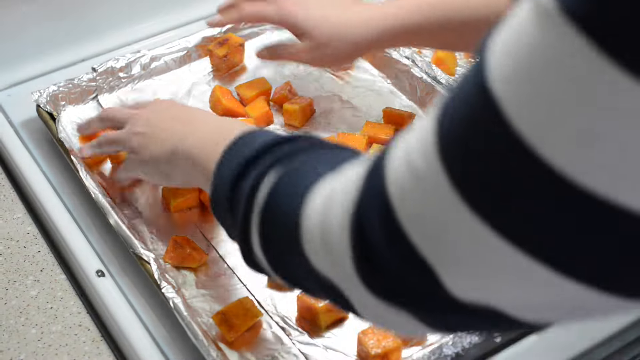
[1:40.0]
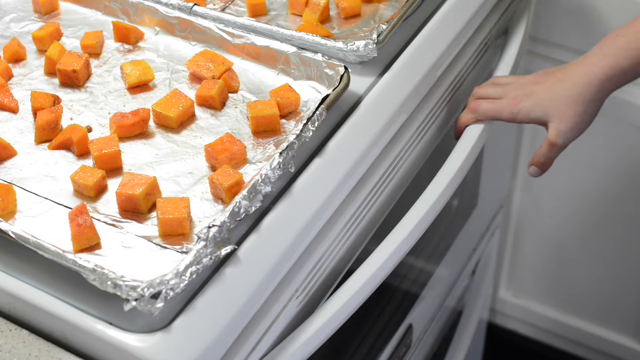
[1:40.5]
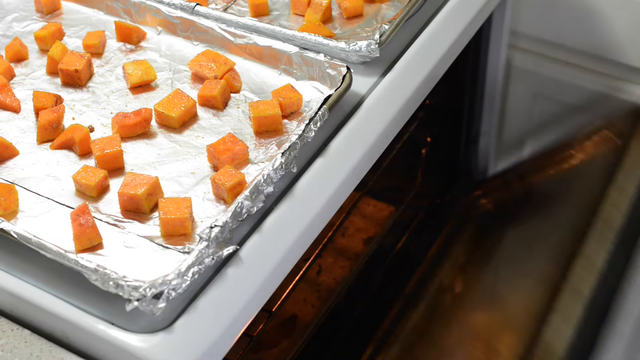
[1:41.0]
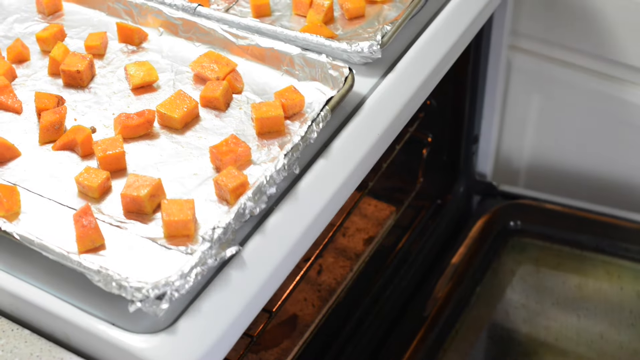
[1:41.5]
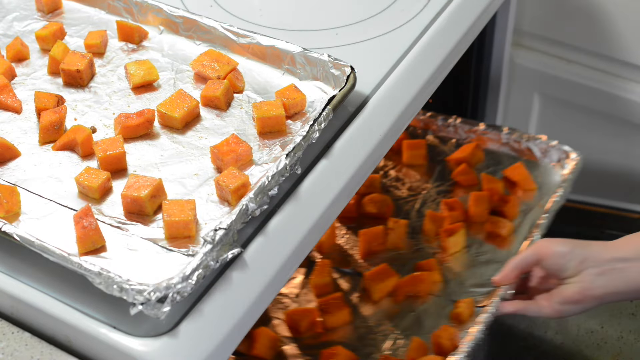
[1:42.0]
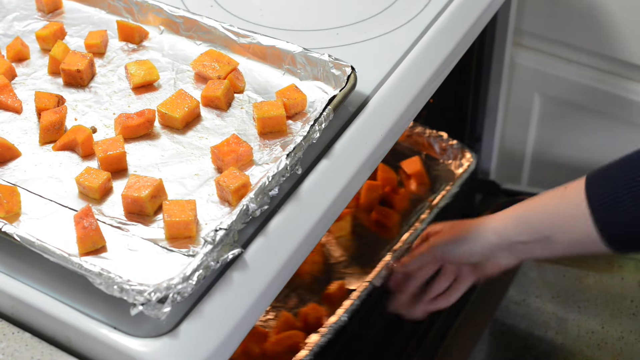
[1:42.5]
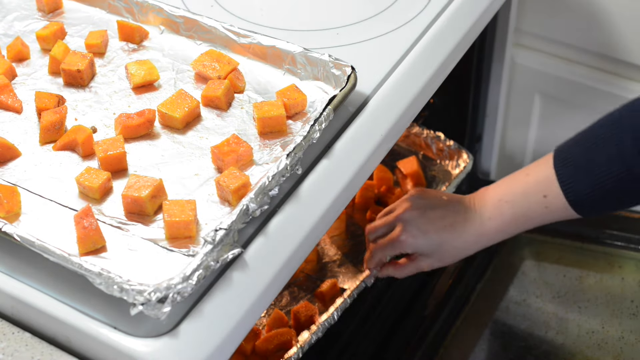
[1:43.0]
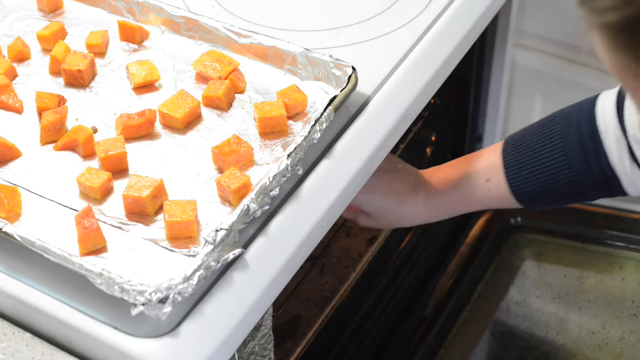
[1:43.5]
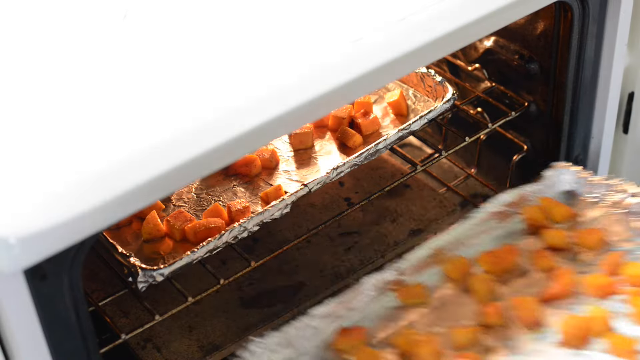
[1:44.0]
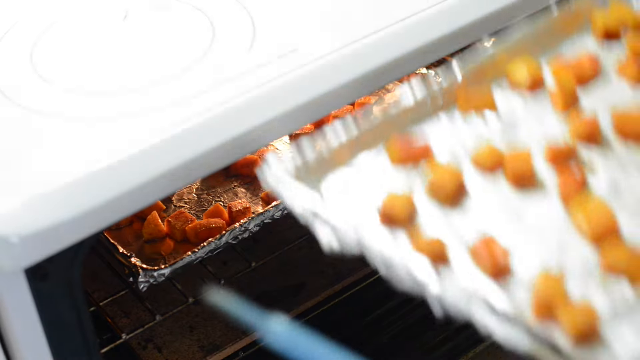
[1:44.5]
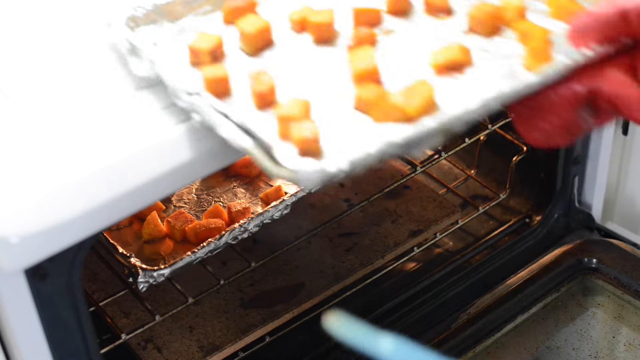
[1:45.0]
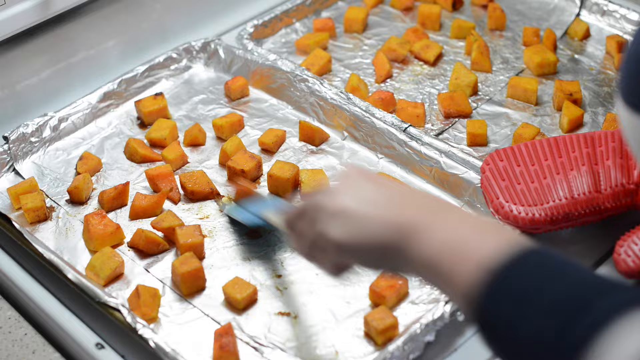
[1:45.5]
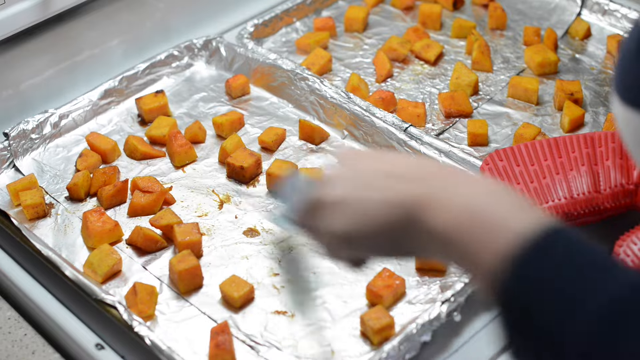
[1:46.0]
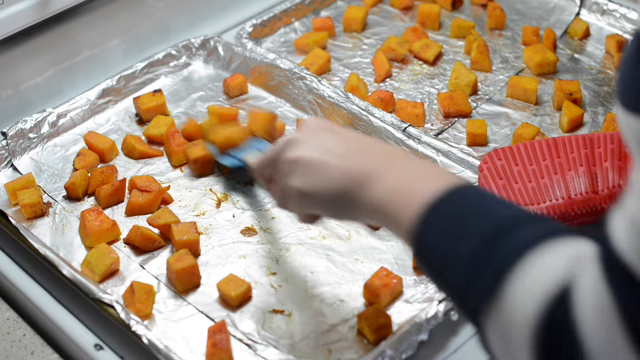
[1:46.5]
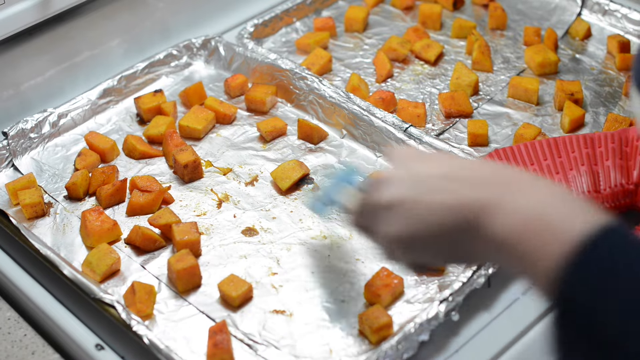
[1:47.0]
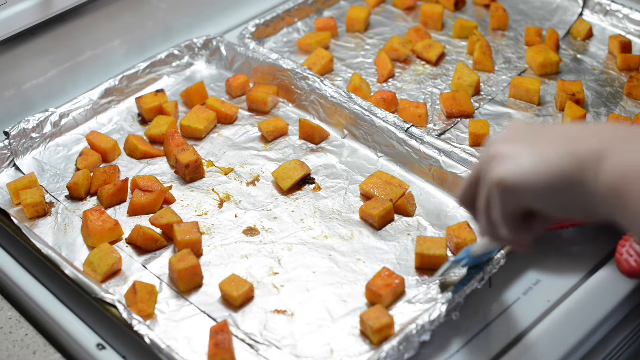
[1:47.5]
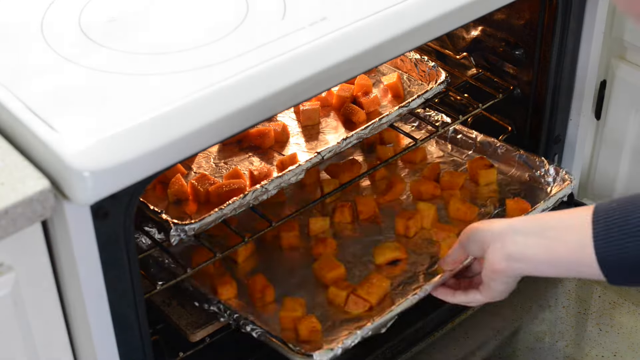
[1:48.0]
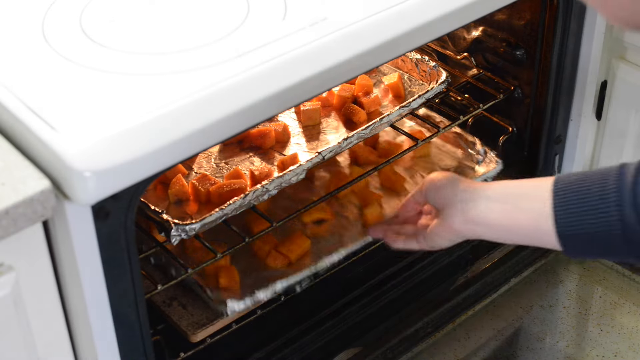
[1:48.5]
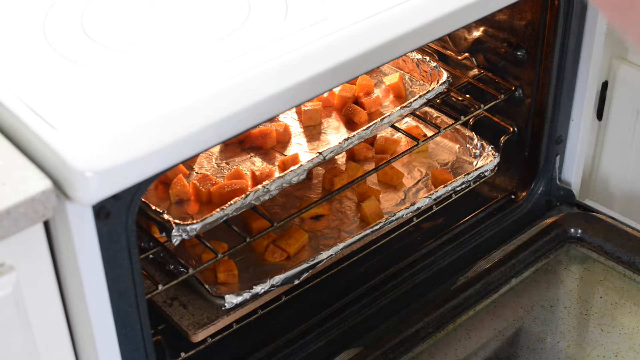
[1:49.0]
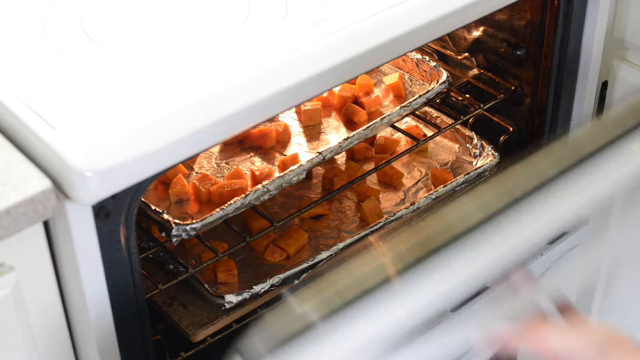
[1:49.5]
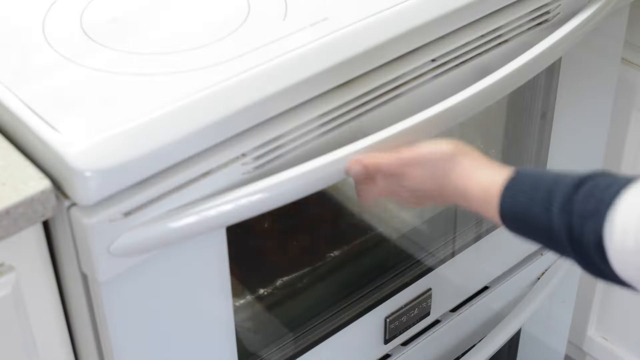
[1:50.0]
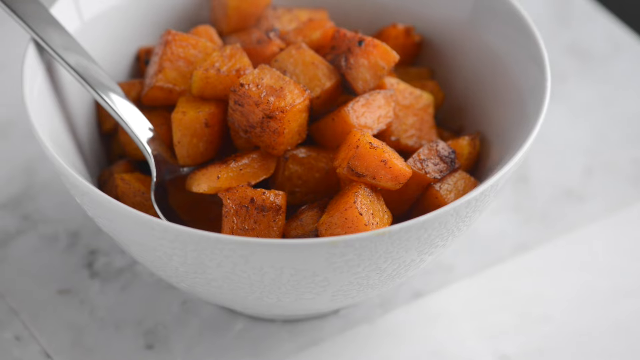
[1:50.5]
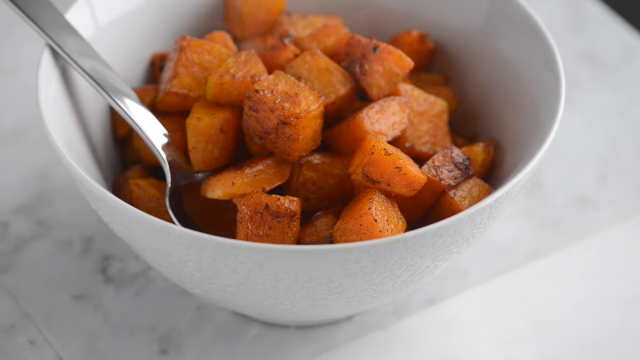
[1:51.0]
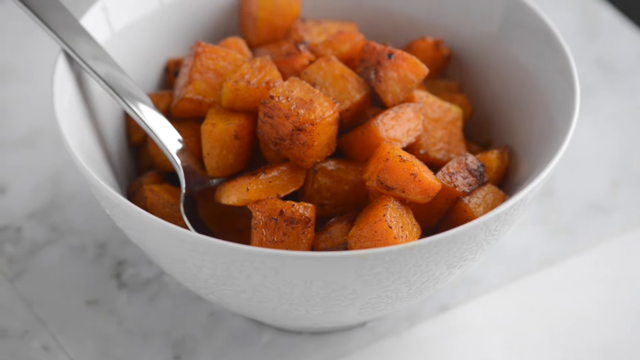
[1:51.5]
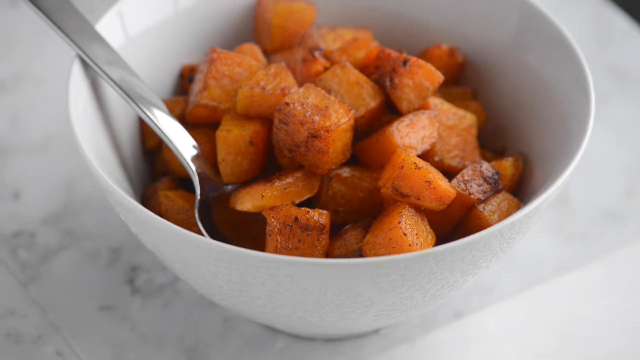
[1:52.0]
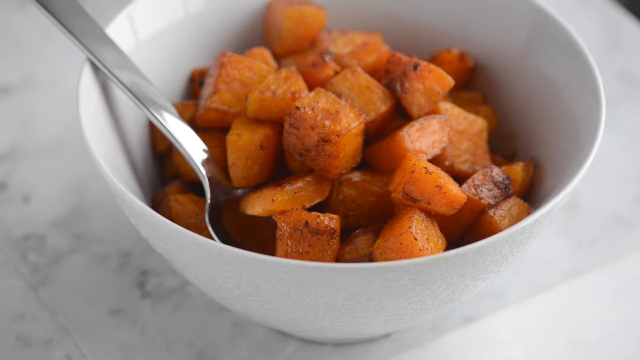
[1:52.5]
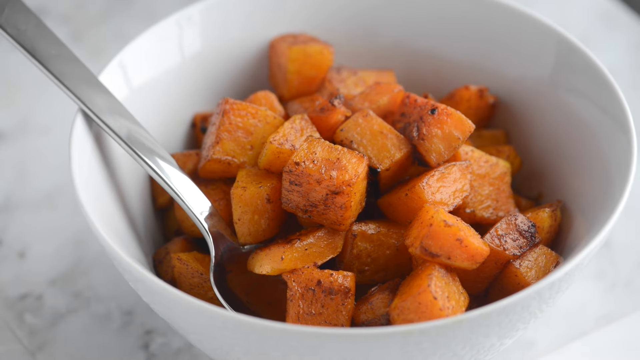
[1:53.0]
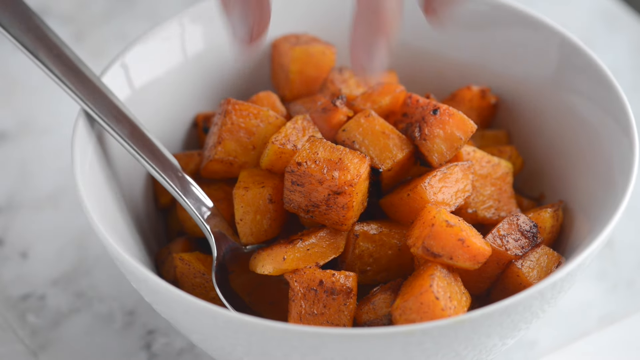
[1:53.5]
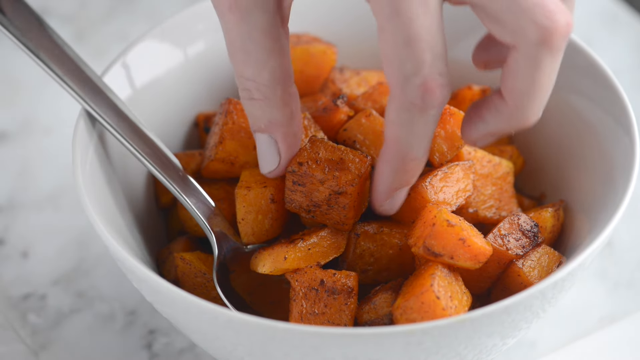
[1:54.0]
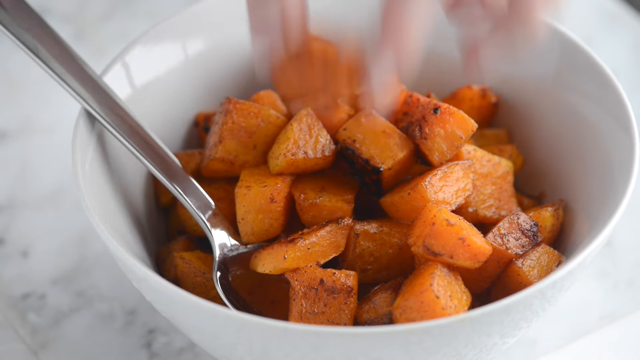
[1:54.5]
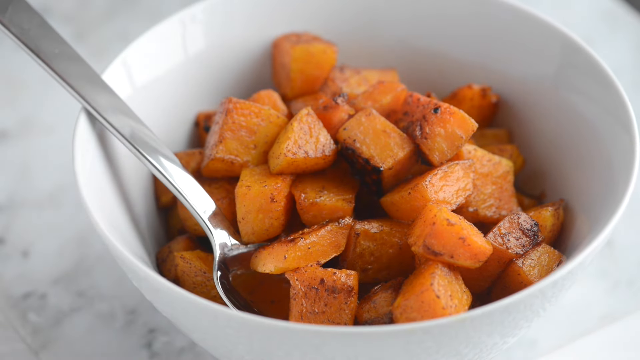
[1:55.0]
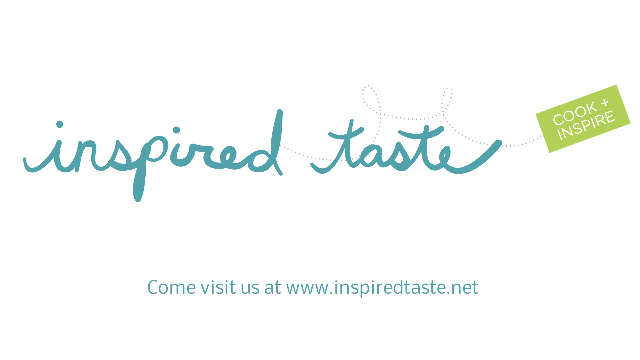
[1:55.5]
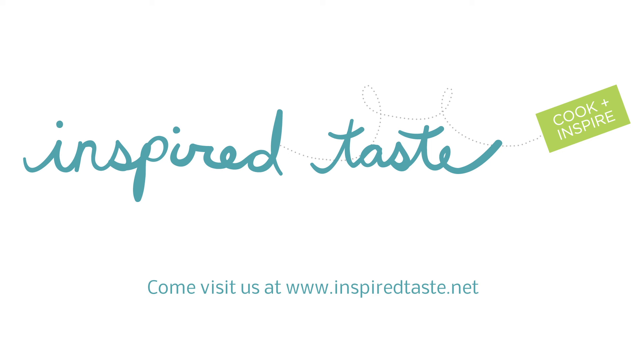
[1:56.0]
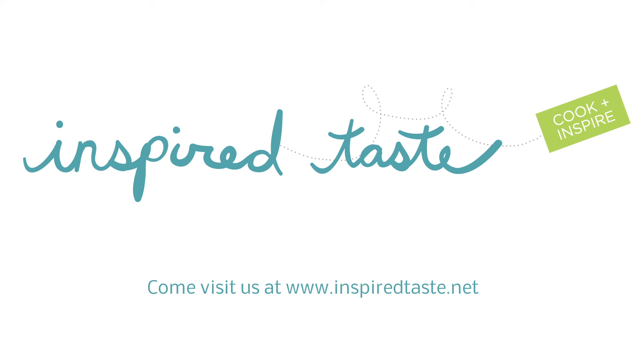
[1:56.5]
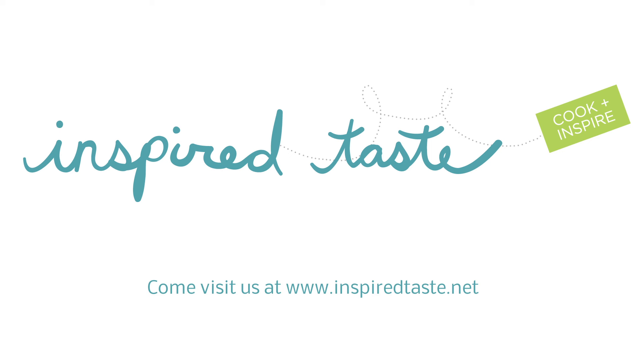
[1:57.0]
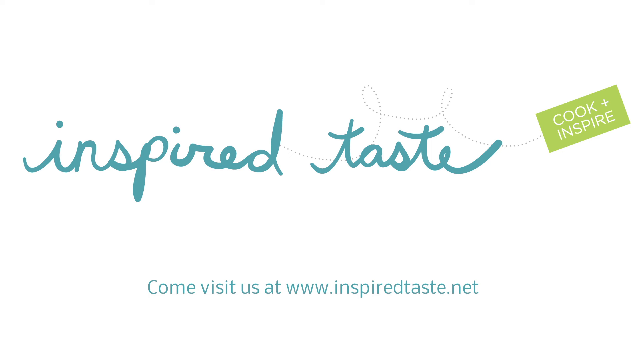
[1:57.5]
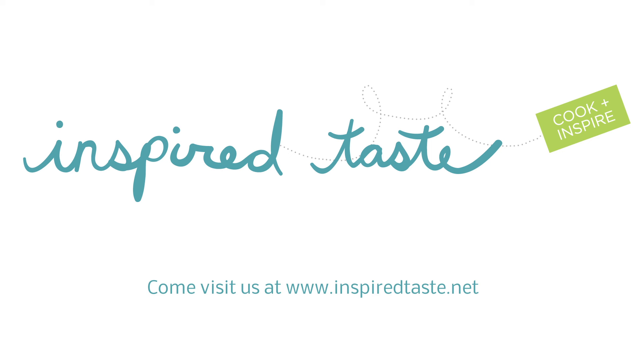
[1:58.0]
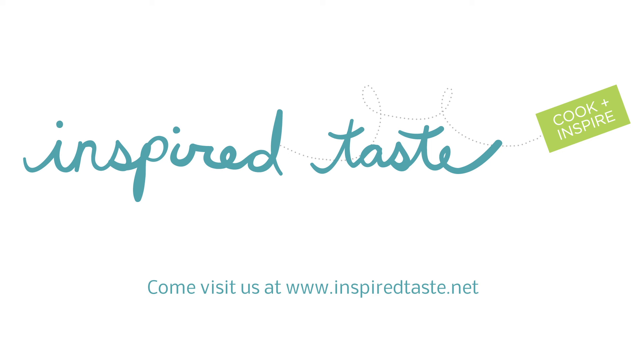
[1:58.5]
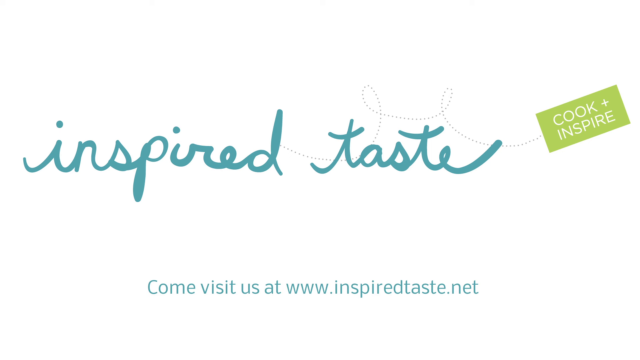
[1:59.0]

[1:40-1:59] A person puts two 13x9 pans of squash into a white oven and closes the door. They then pull the pans out of the oven, apparently using a light red oven mitt, and use a light blue spatula to scrape the pieces off the foil, some of which is flaking off the pans a little. Some pieces look a little blackened, but otherwise they look appetizing. The inside of the oven appears a bit dirty. At the end of the video, the squash is shown in a white bowl with a silver spoon visible, and the person sticks their fingers into the bowl and picks up one of the cubed squash pieces. The video is an amateur production with a lot of repetition and quick cuts.